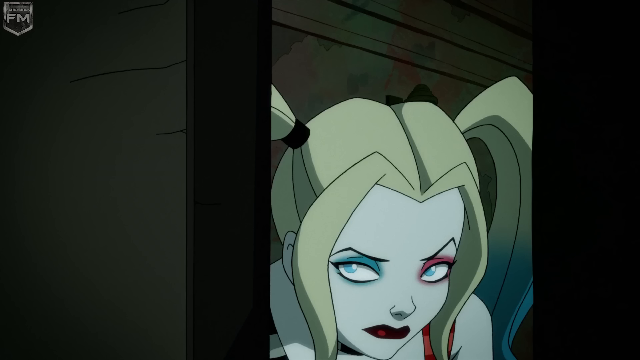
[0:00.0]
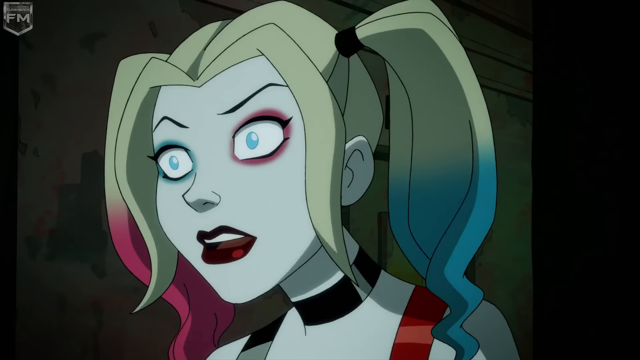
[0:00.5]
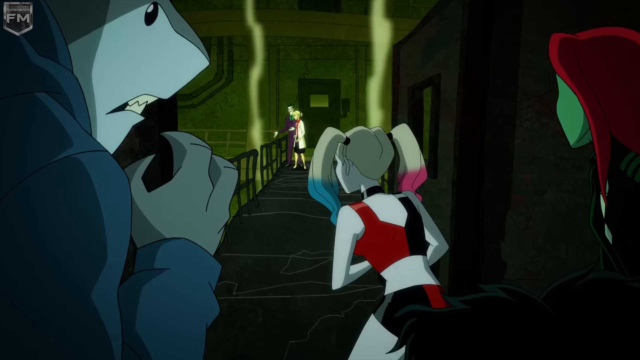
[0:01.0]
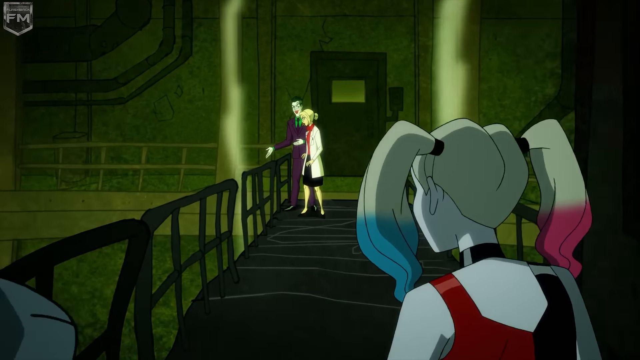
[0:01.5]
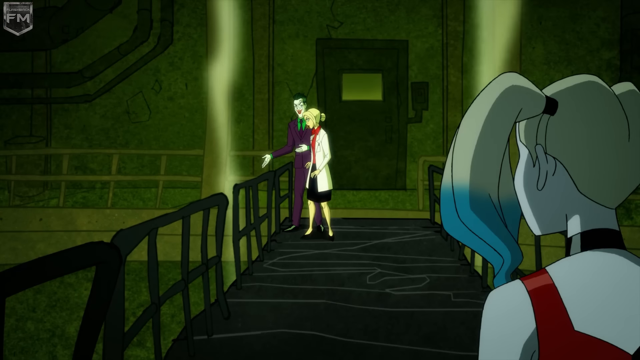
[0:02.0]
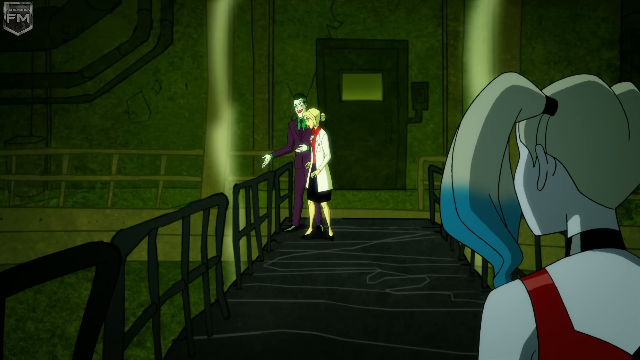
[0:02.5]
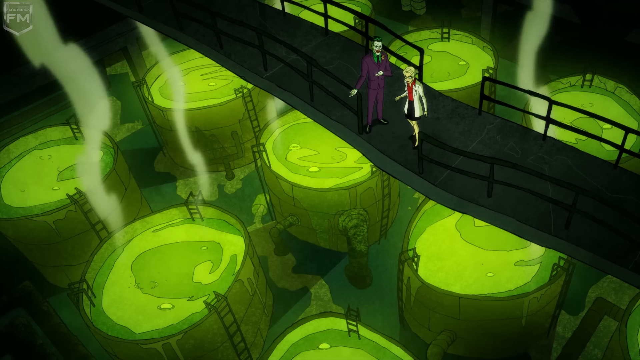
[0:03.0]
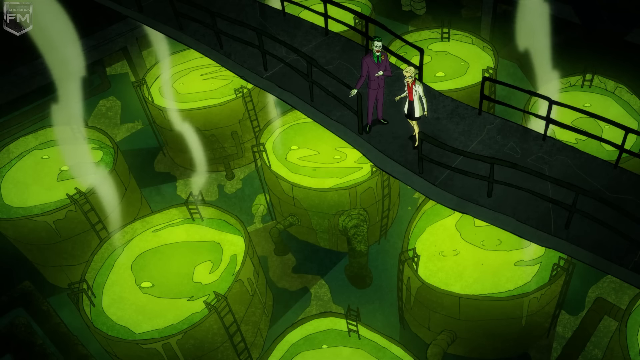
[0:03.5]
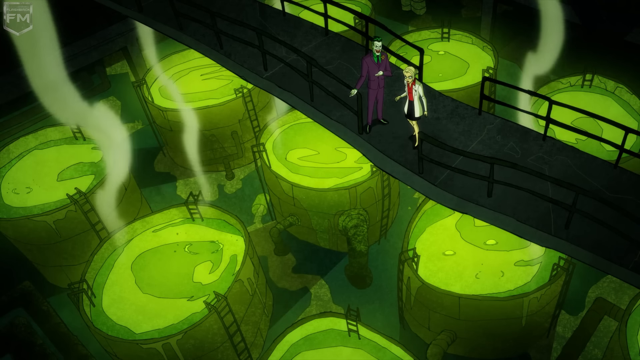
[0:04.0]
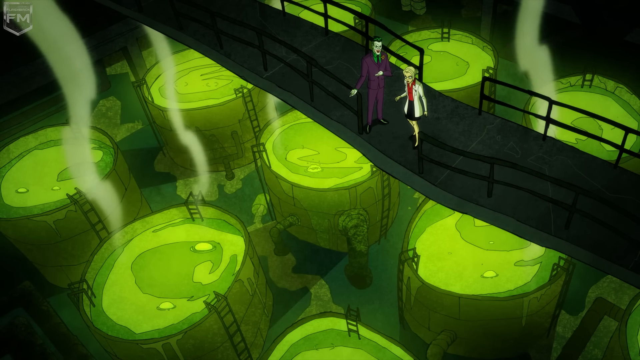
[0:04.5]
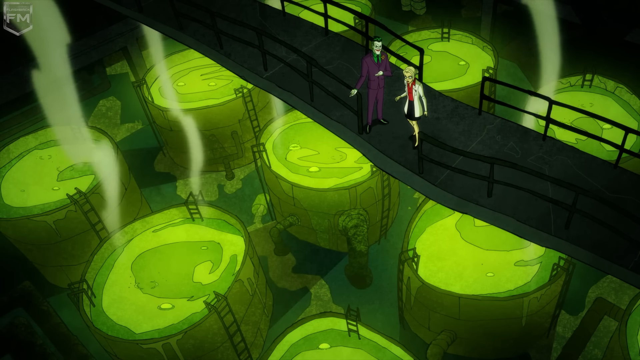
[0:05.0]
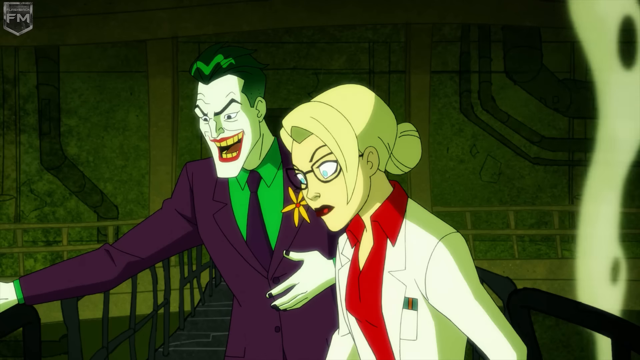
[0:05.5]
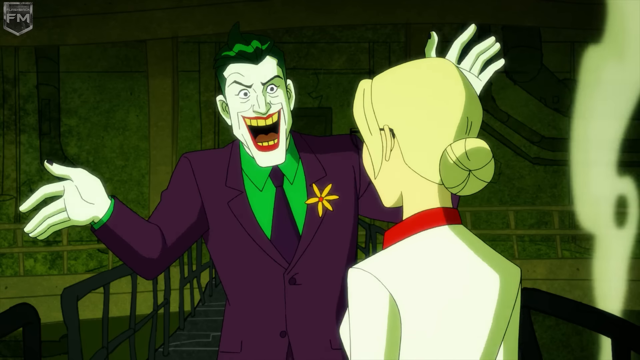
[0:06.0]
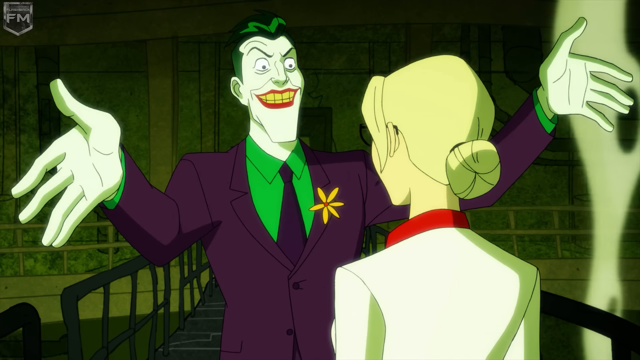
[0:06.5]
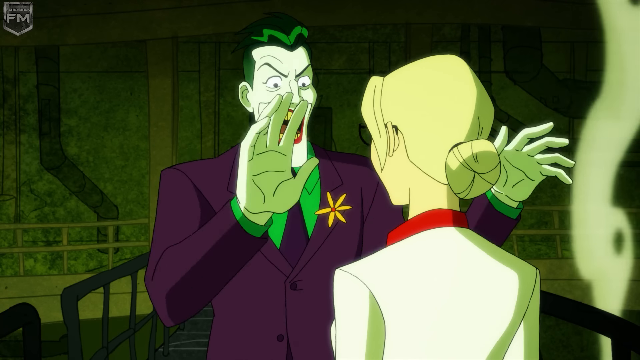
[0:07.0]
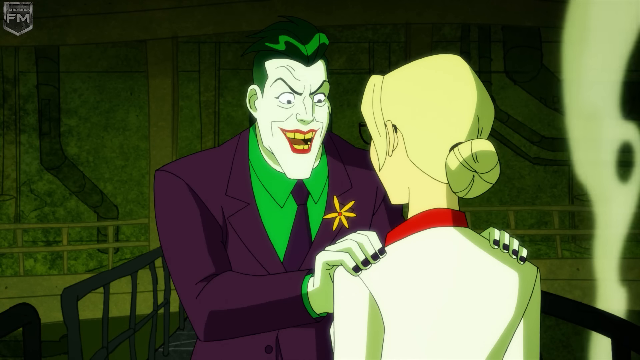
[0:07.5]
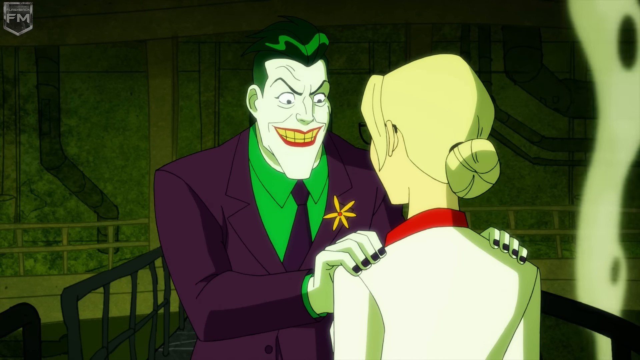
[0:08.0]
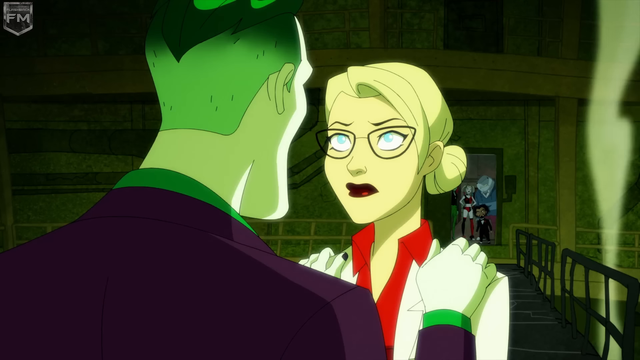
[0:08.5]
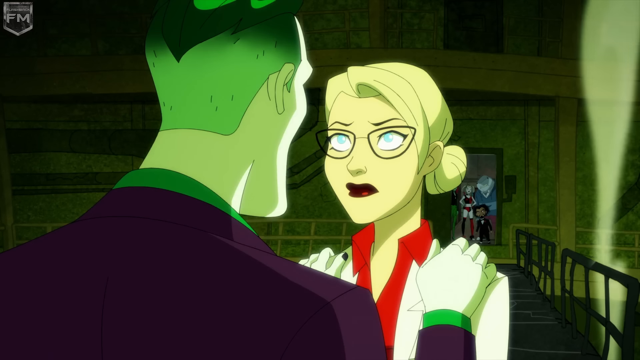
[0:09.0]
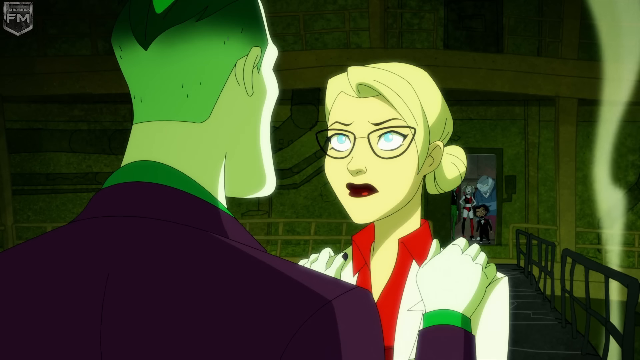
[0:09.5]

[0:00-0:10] The video is an animation with simple black line drawings and block-coloured graphics. In the first scene, three characters are visible from behind, standing at the edge of a corridor with a balcony that overlooks somewhere with green smoke coming up from it. The three are a blue character that looks like a shark, a woman with pigtails, one pigtail with blue tips and the other with pink, and a character with long red hair and green skin. They look over to the end of the corridor, where two more characters, a man in a purple suit and a woman in a white lab coat, are. The view zooms in on those two. The viewpoint then changes to show the purple-suited character and the blonde-haired woman in the lab coat standing on a suspended walkway. Below them are tanks of green liquid with green smoke coming up from them.